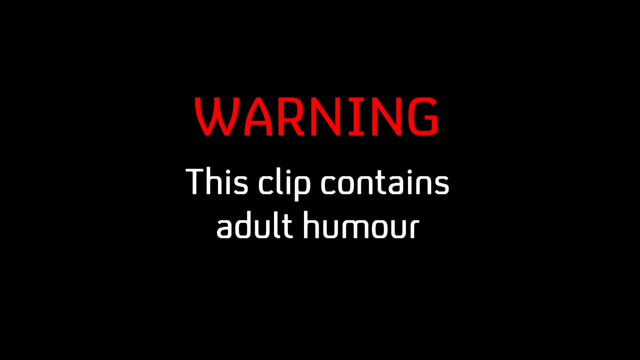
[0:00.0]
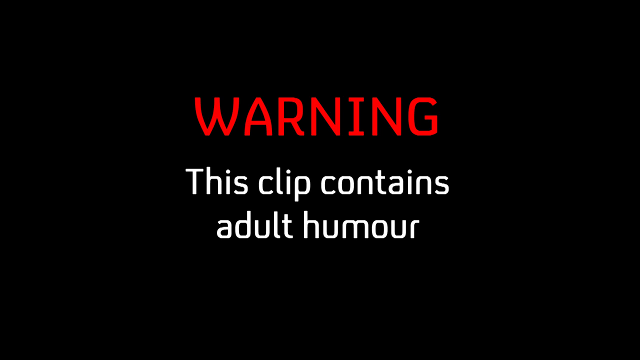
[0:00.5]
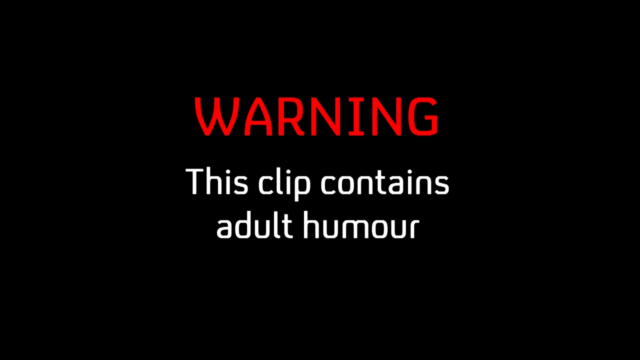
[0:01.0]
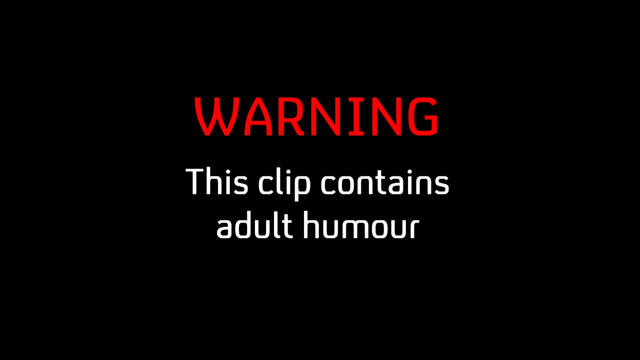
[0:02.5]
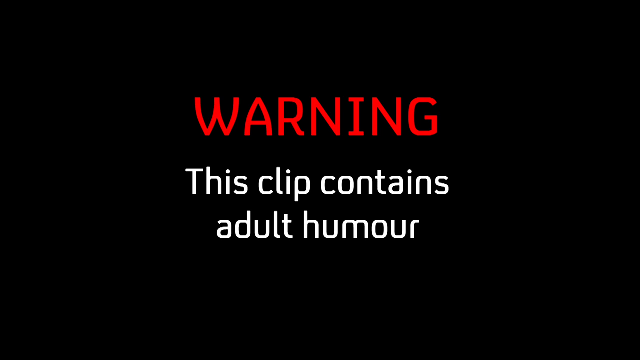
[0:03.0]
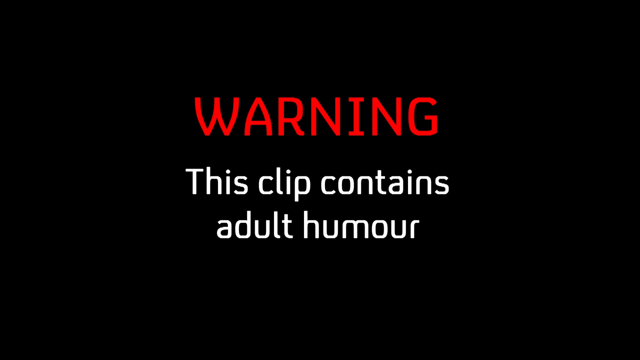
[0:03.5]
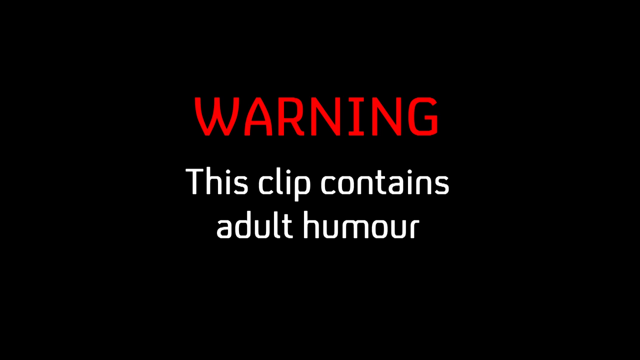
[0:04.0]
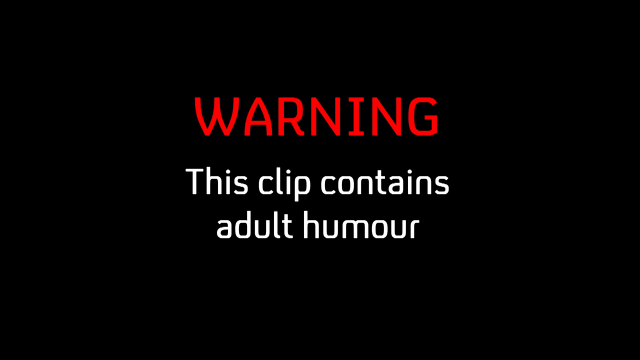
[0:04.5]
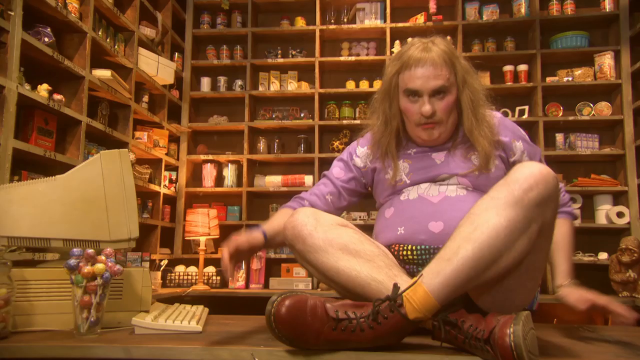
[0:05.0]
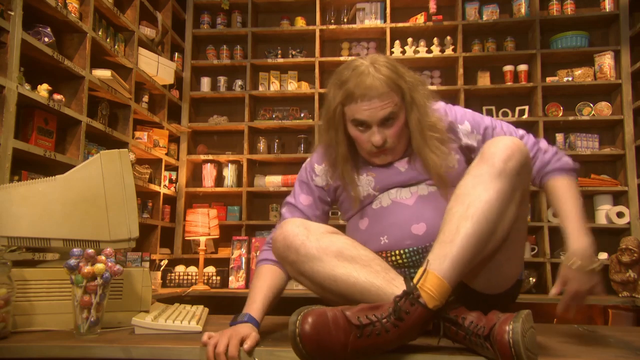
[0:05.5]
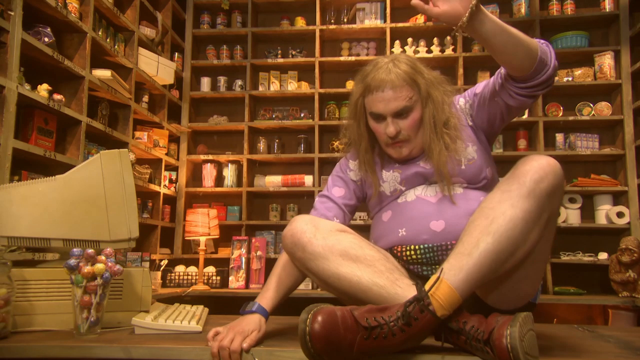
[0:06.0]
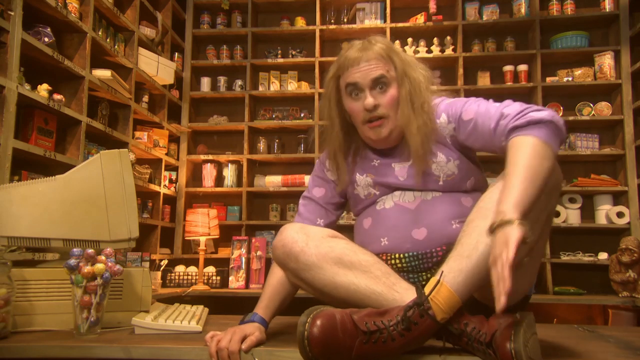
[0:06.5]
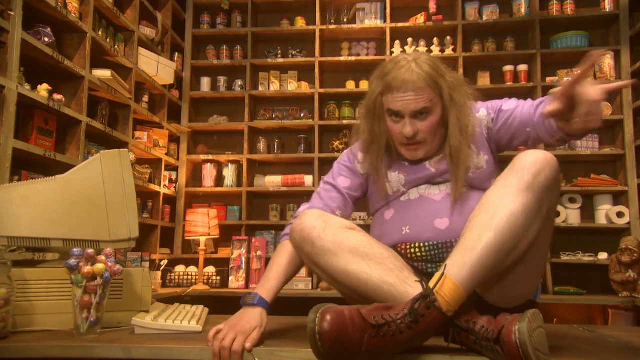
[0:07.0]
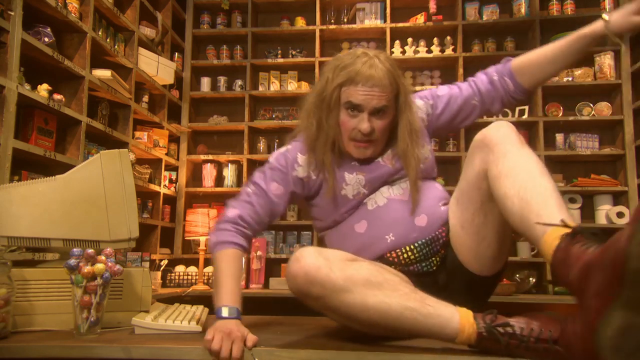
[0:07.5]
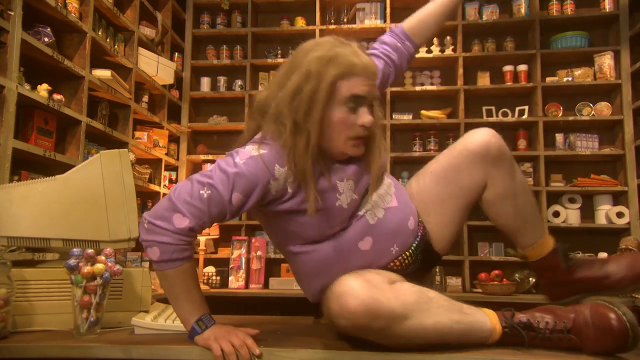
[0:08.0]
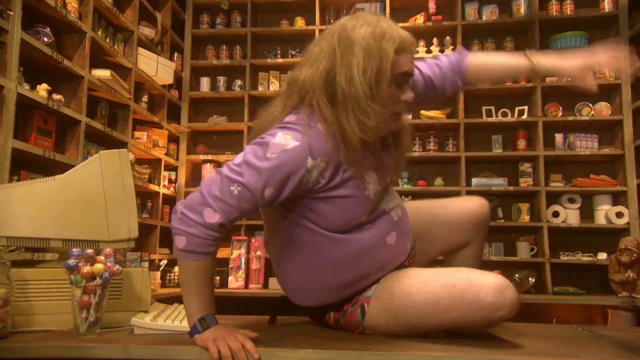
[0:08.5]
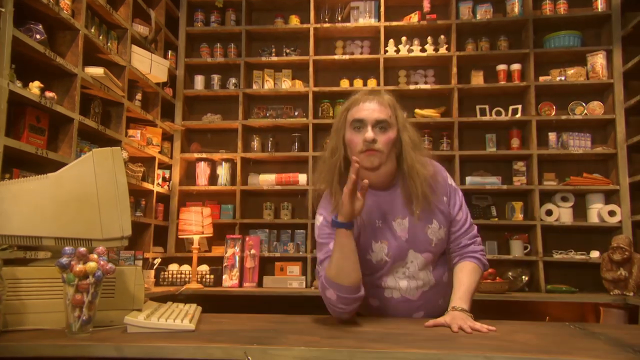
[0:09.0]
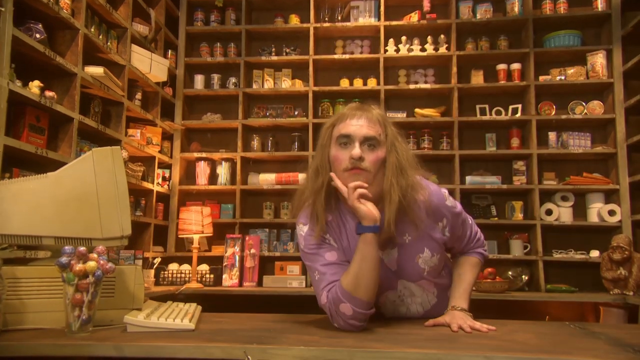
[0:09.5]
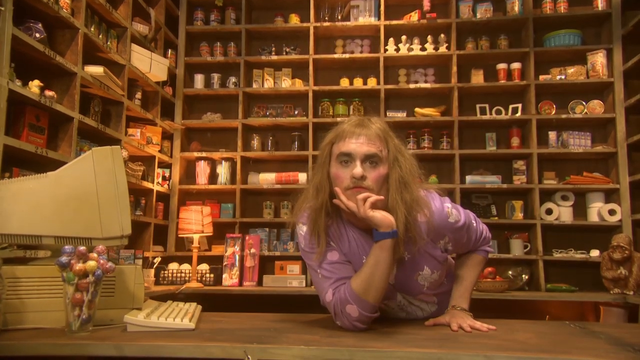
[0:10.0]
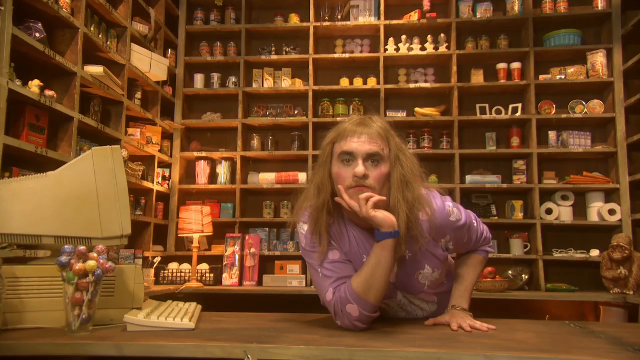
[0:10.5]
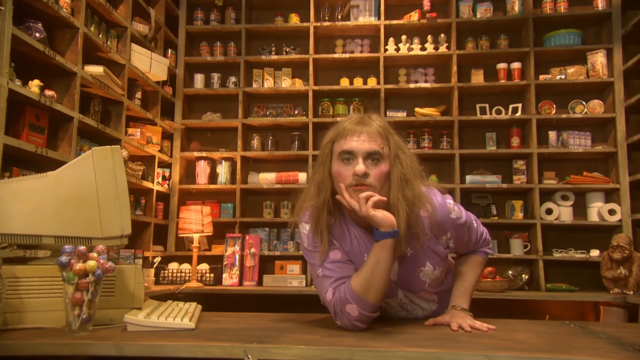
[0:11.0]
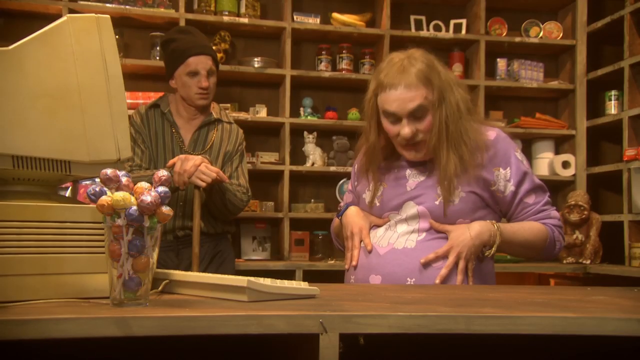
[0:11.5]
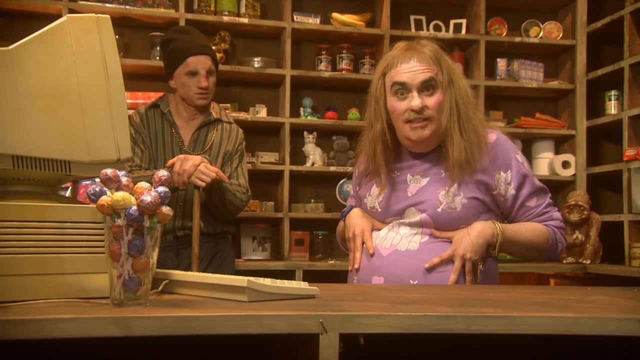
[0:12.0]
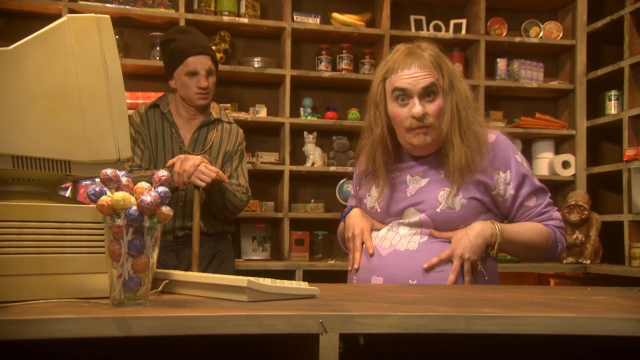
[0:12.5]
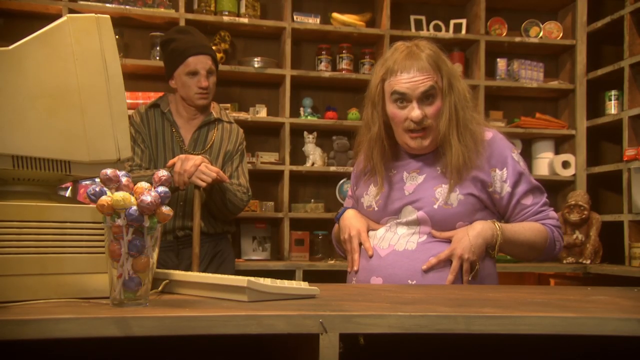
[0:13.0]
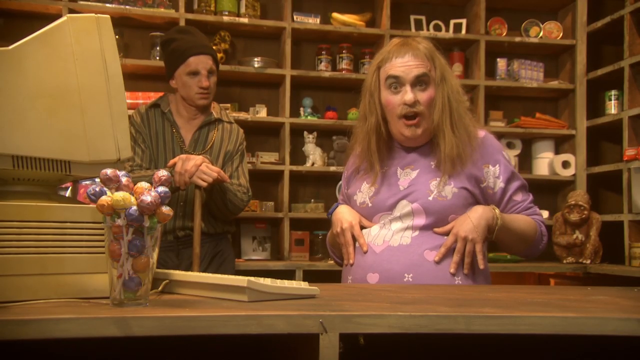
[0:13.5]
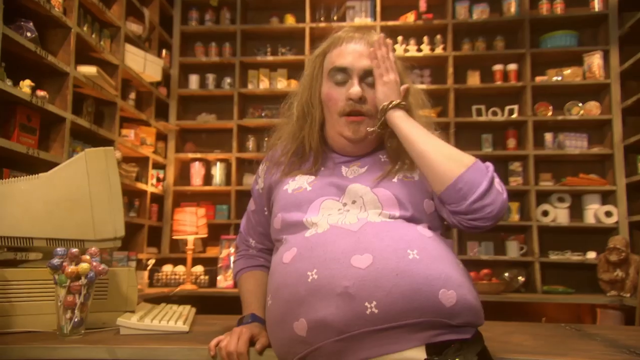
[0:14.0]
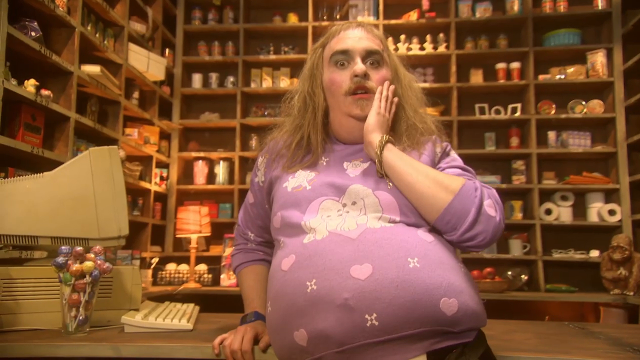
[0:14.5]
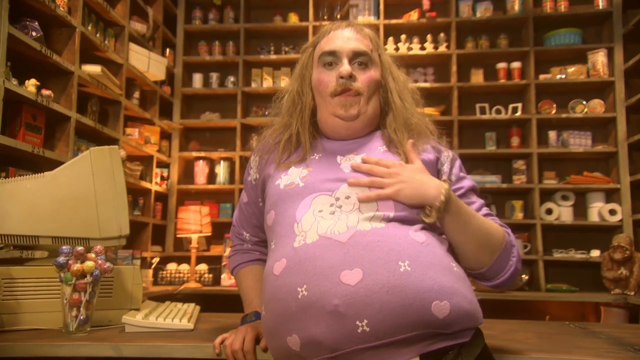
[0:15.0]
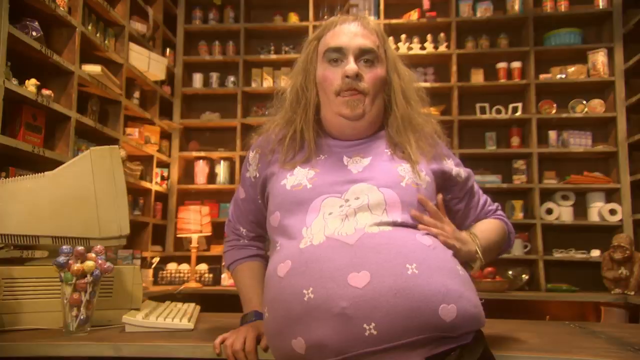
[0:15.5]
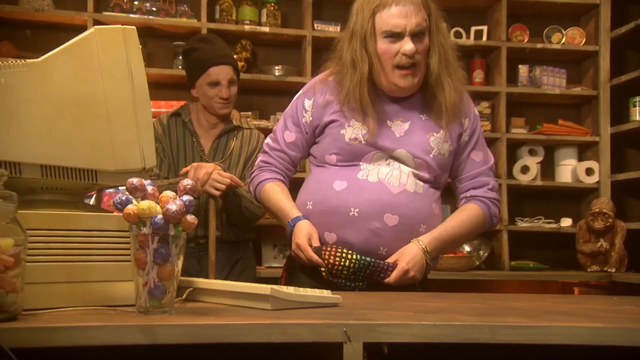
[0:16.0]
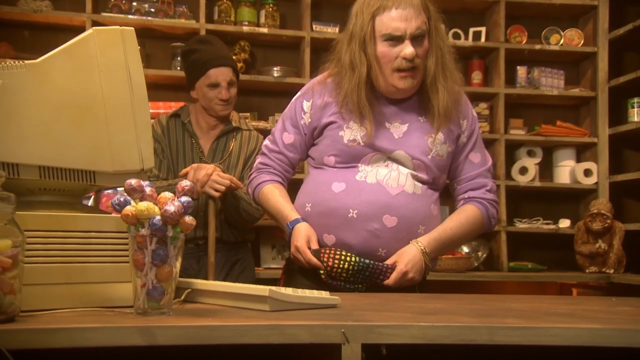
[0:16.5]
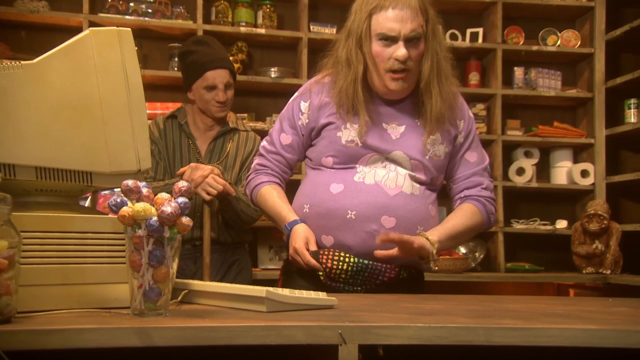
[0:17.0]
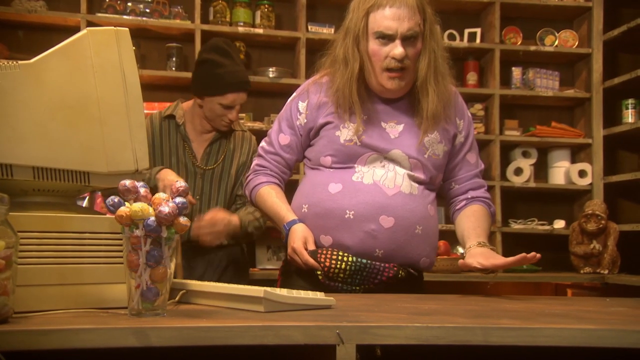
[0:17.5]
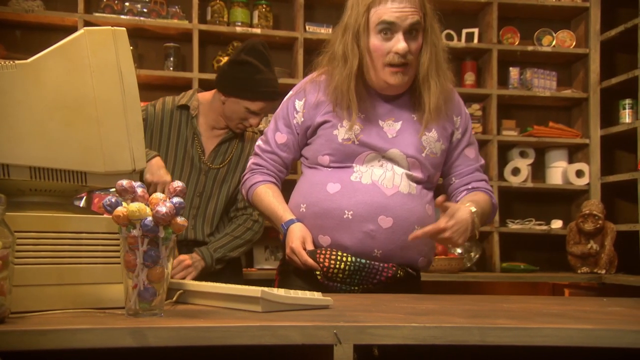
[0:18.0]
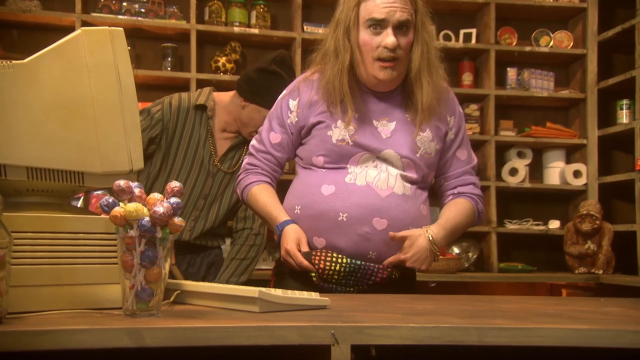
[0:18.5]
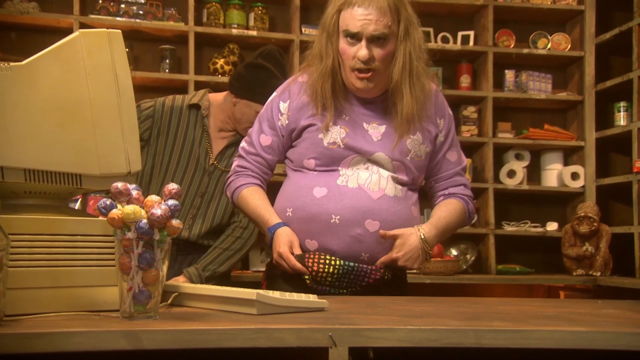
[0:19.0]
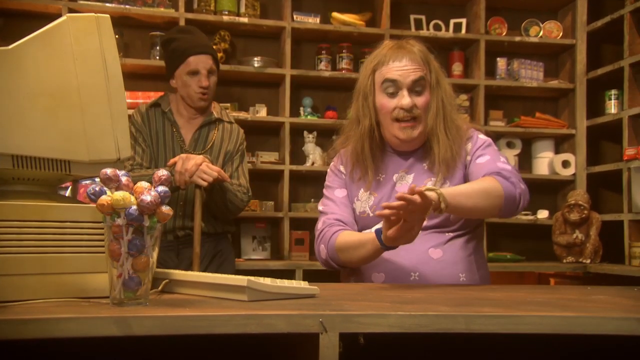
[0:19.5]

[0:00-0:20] A warning in red print reads "this clip contains adult humor," with humor spelled with a u. Apparently a man with light brown hair appears, surrounded by shelves holding lots of things: one has toilet paper, another has cups, and there is a thing with suckers, among all kinds of other items. He wears a pink shirt with hearts and colored shorts, and he has makeup on. There is an old-fashioned computer. He leans over the counter, puts his hand on his chin, and pretends to kiss the camera from far back. Next he points to his stomach. A man with a broom behind him is watching, then goes back to sweeping.